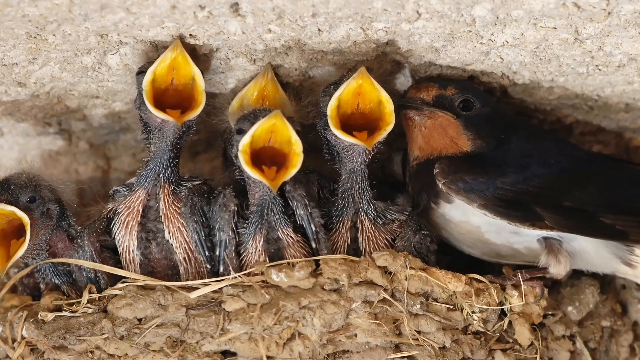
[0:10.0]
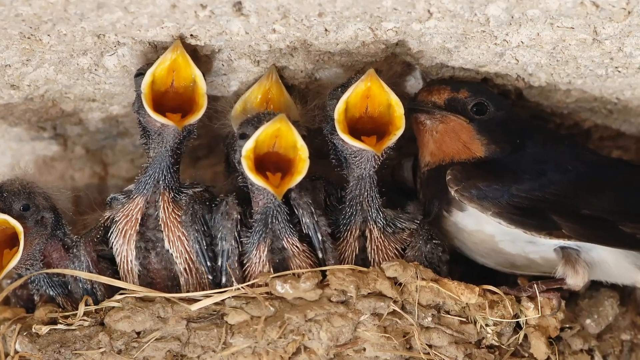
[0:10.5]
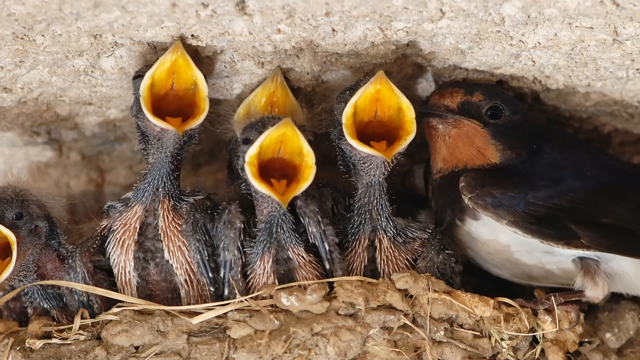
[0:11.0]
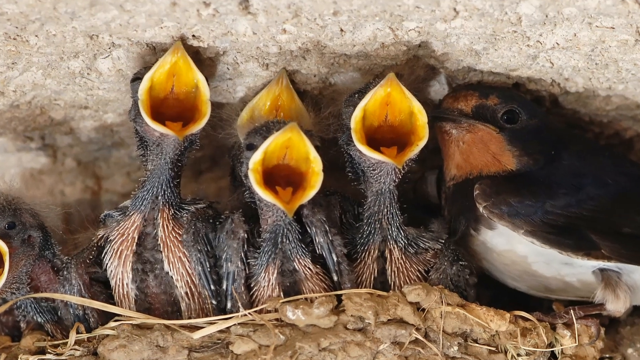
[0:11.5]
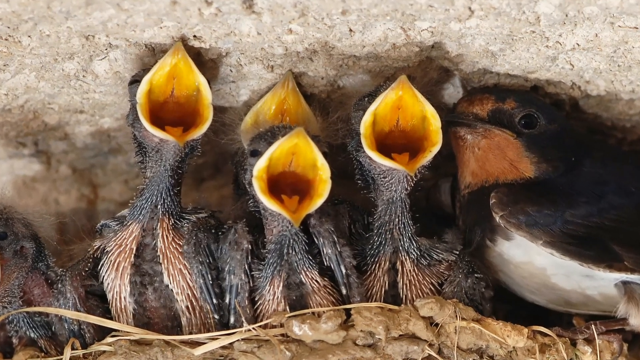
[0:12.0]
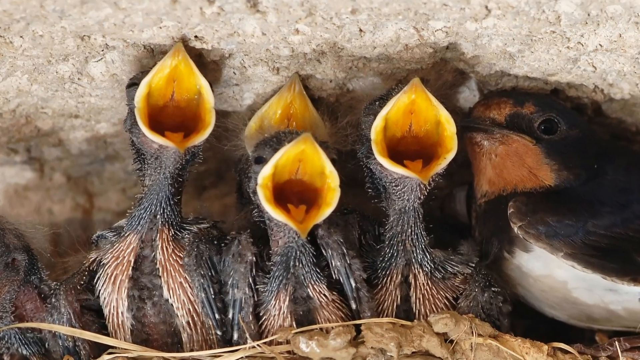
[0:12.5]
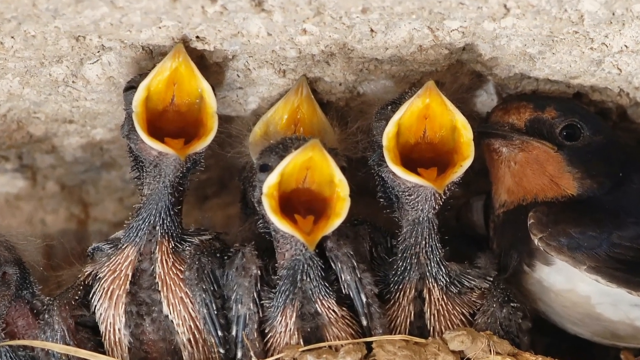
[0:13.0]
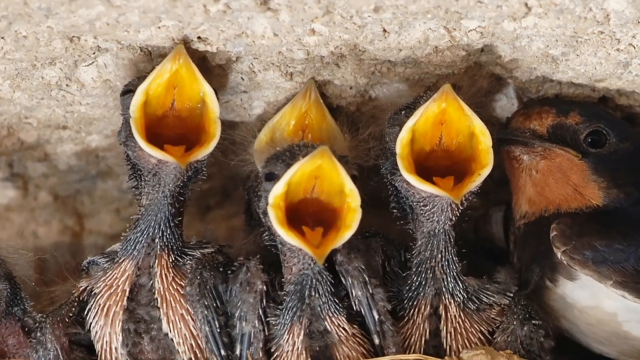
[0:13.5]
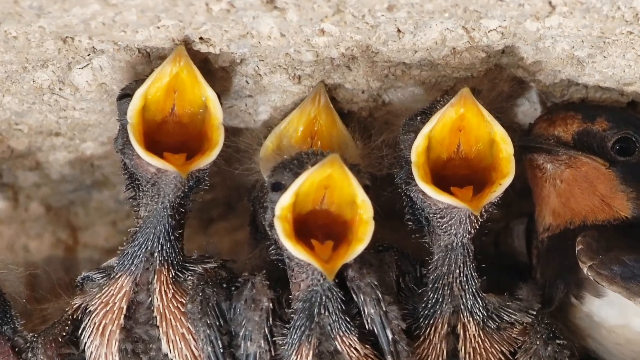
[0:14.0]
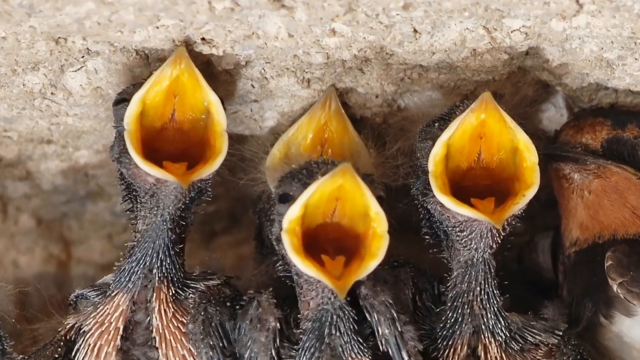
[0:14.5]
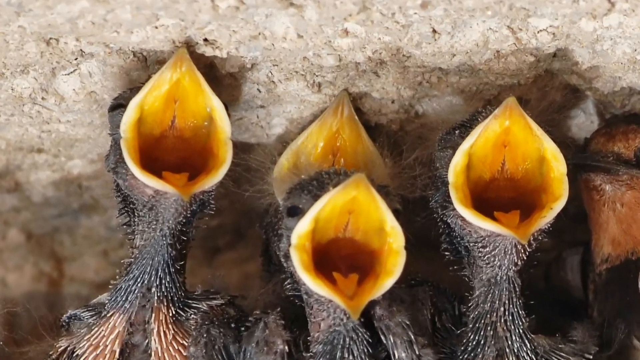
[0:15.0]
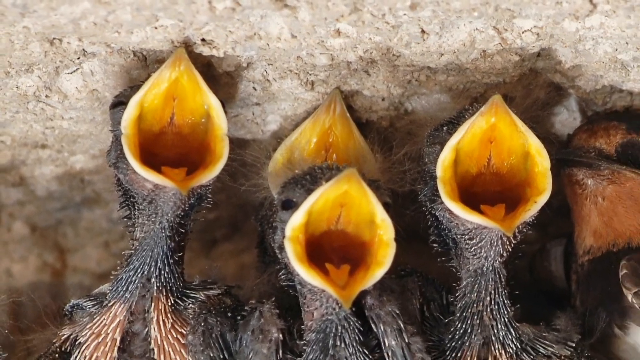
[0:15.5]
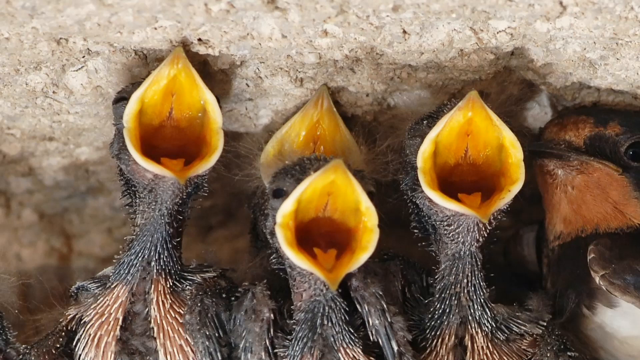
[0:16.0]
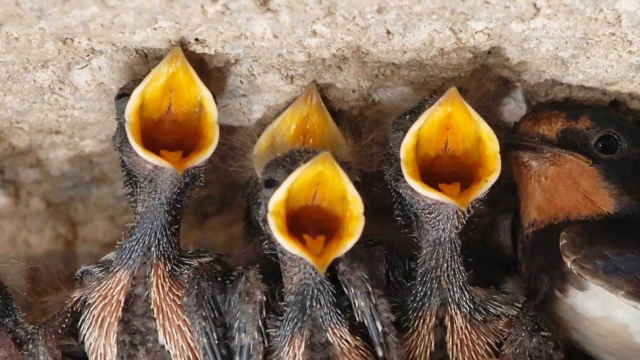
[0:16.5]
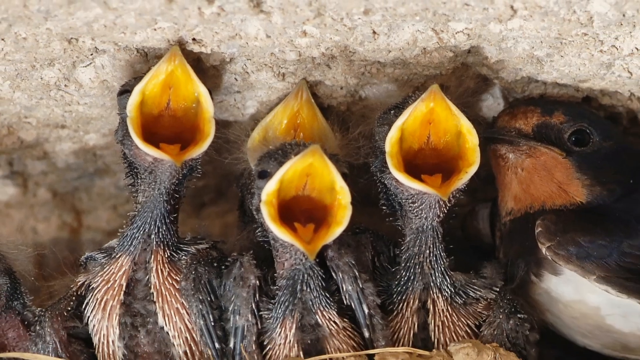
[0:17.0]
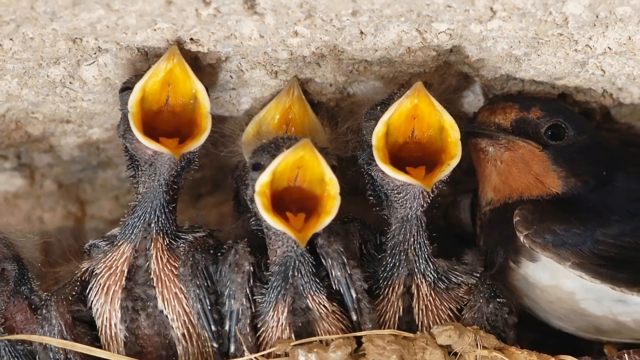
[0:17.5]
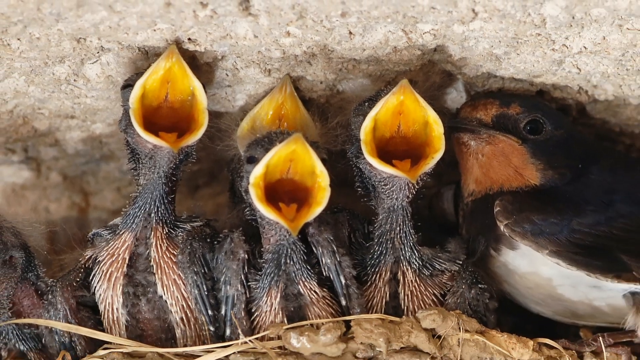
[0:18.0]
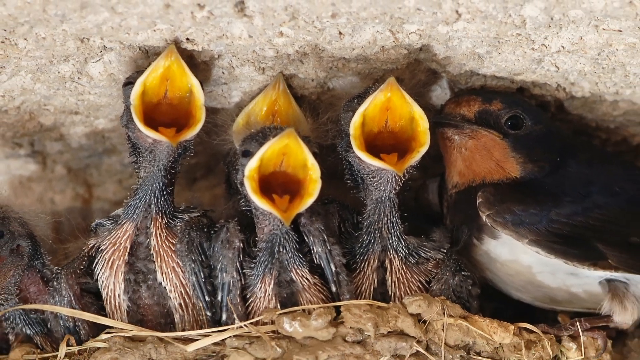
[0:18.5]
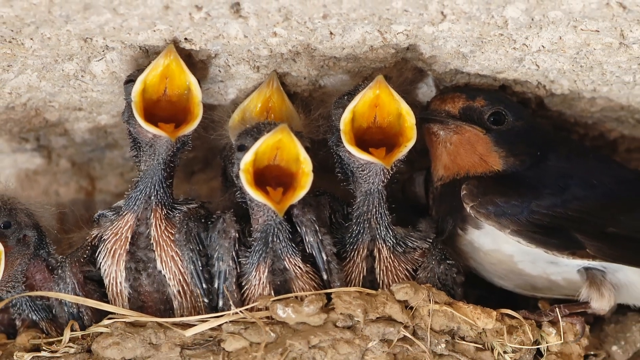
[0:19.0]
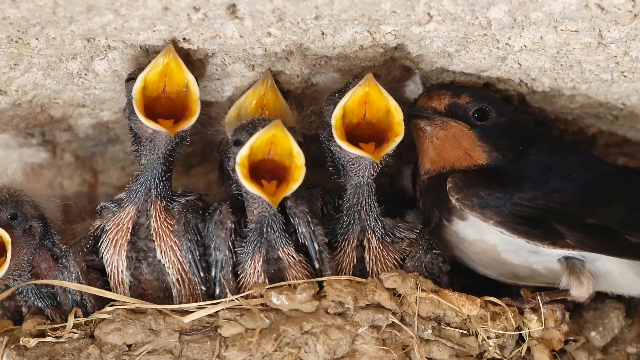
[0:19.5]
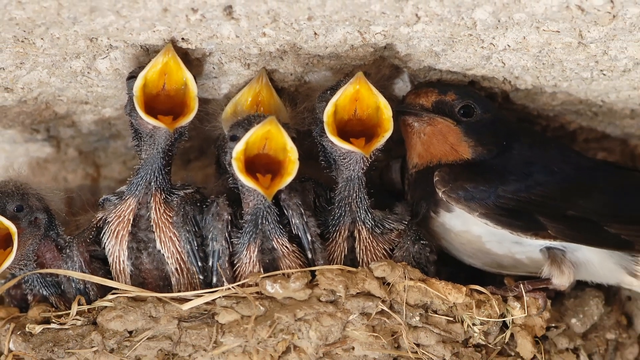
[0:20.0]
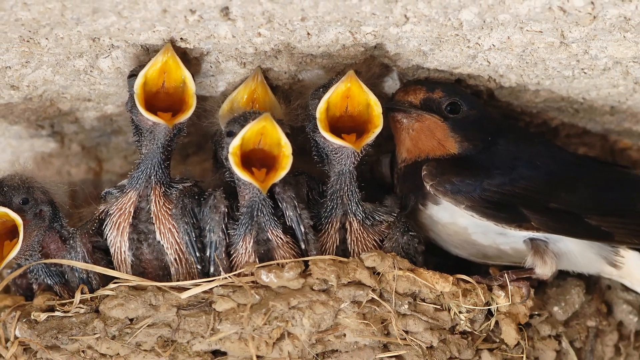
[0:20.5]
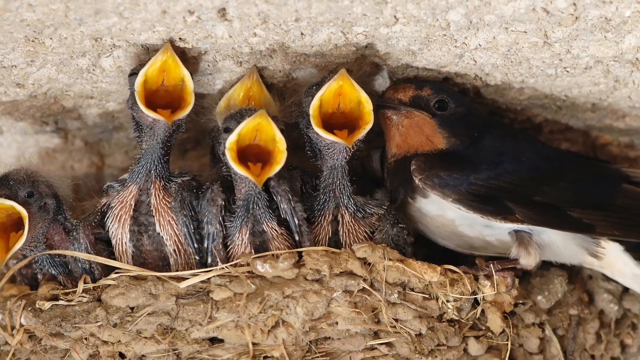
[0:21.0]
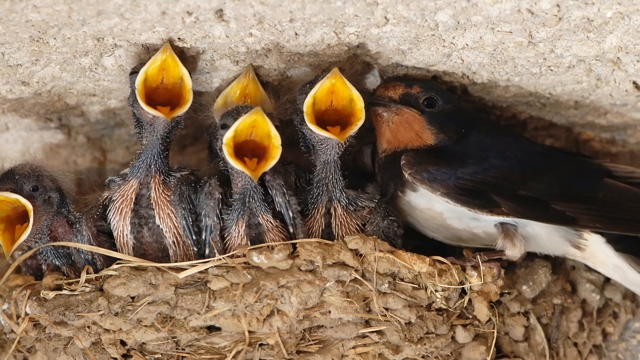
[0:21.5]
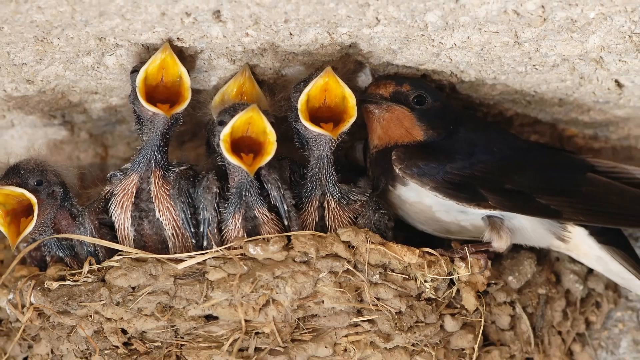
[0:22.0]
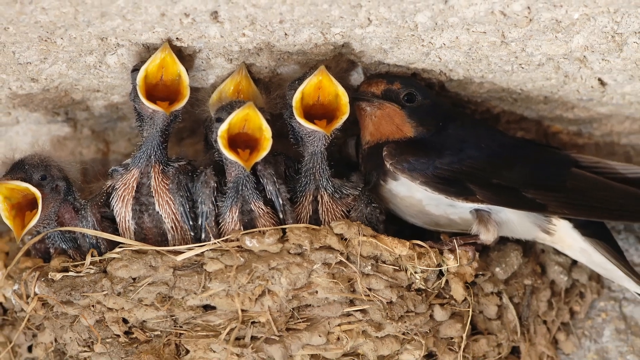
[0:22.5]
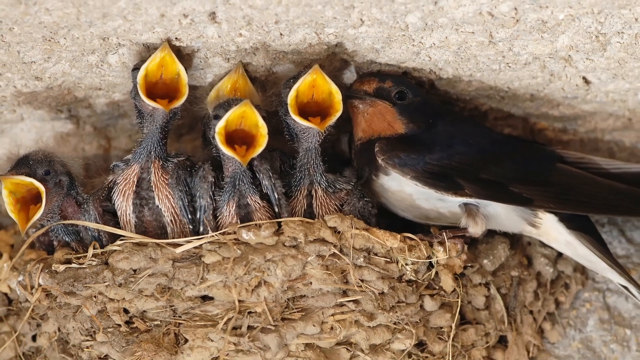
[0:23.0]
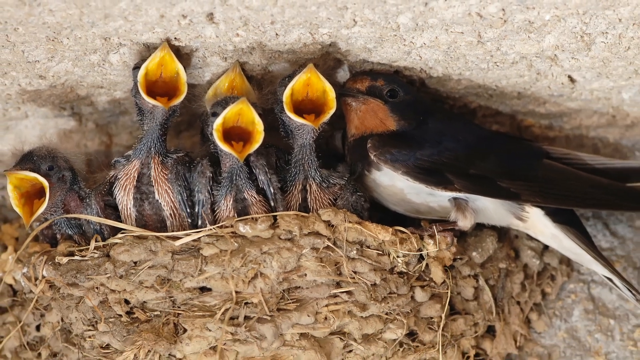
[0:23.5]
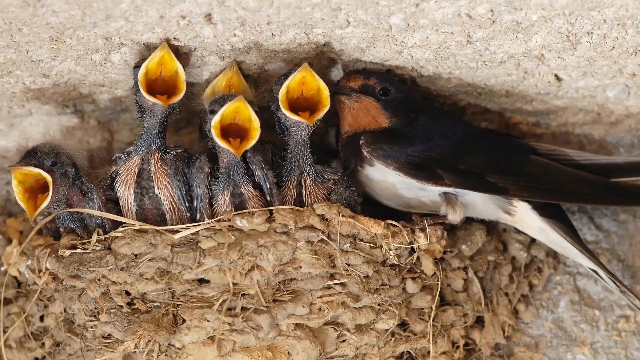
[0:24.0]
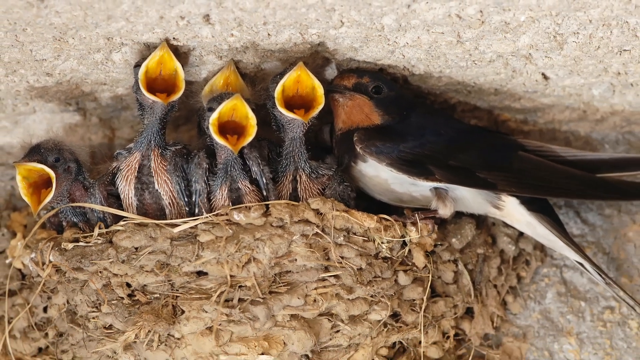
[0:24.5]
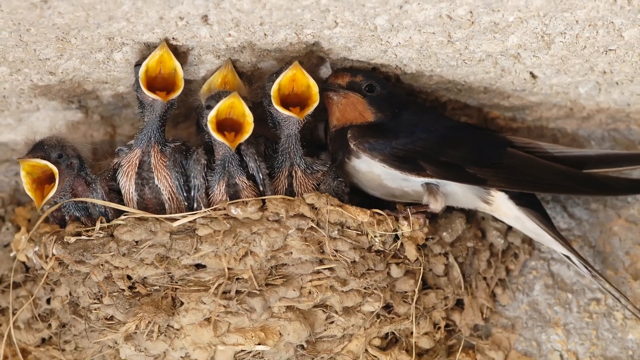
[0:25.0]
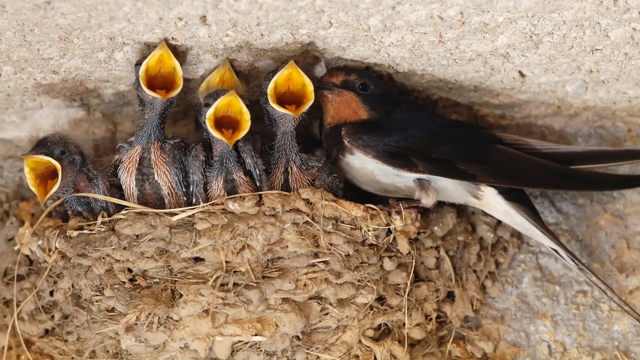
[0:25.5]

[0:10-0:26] The static image does not appear to be moving footage; the view zooms in and out on it. The young birds have their mouths open, with maybe their small tongues visible inside, and they are all looking up. They appear to be on a mud nest, possibly with some rocks behind them; the background is gray and difficult to make out. The adult bird on the side is sat there facing the young birds. It has dark, almost black feathers on the upper areas of its body, a dirty white underside near its feet, and some brown under its beak and a bit above its eyes. The young birds are a lighter shade than the parent but still quite dark.